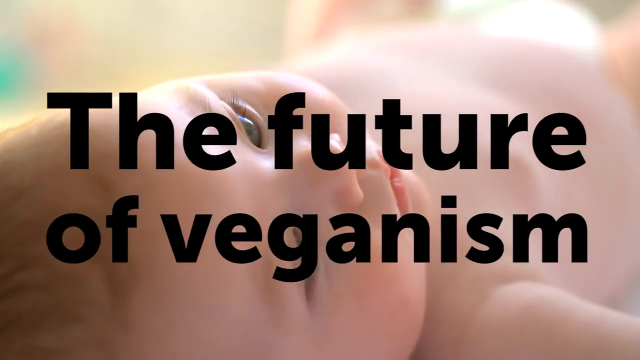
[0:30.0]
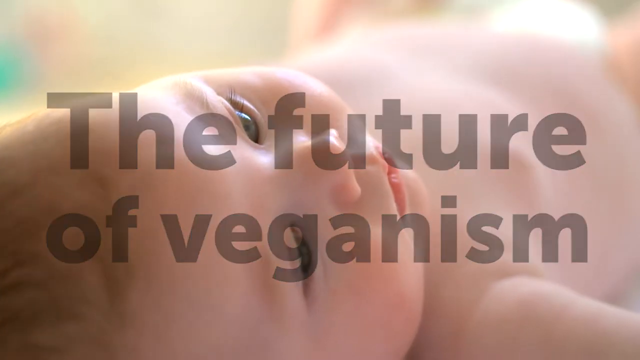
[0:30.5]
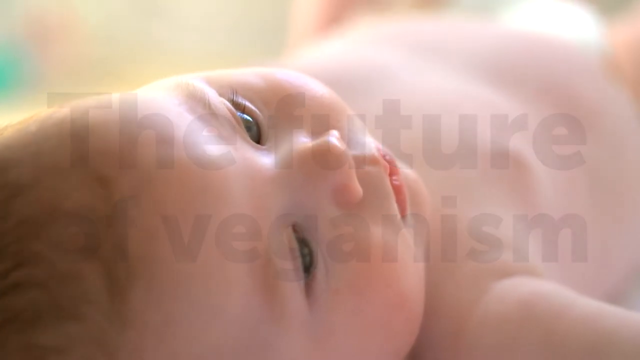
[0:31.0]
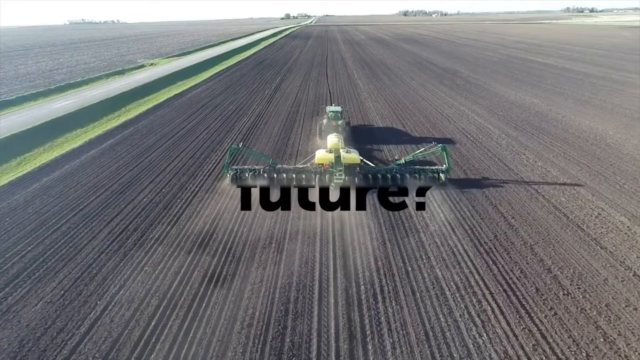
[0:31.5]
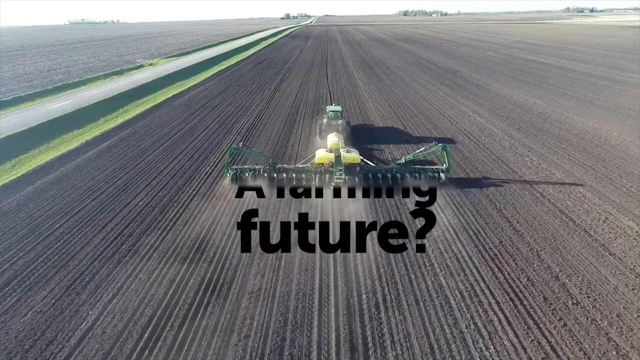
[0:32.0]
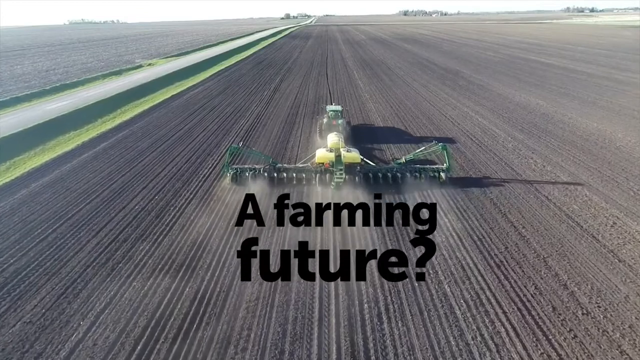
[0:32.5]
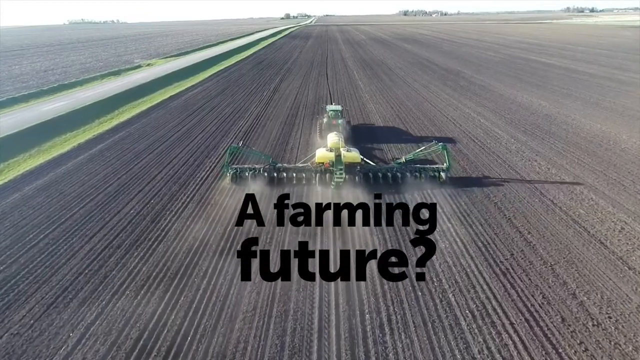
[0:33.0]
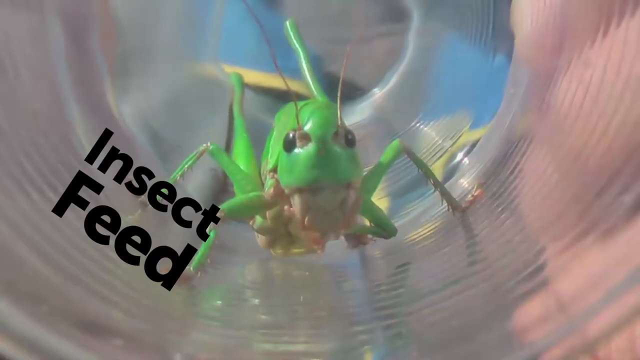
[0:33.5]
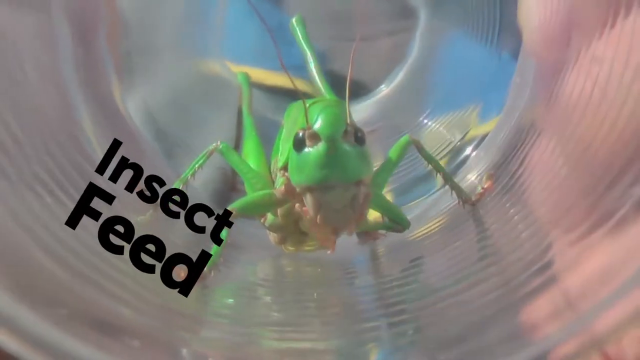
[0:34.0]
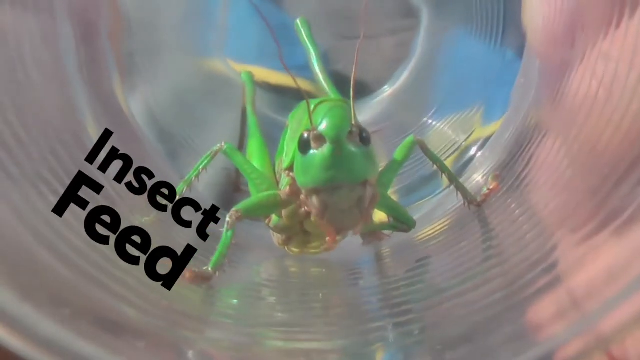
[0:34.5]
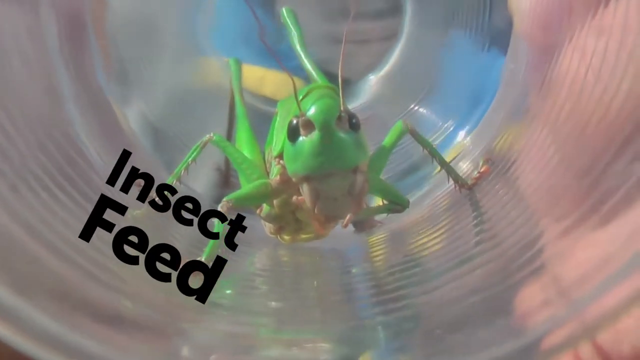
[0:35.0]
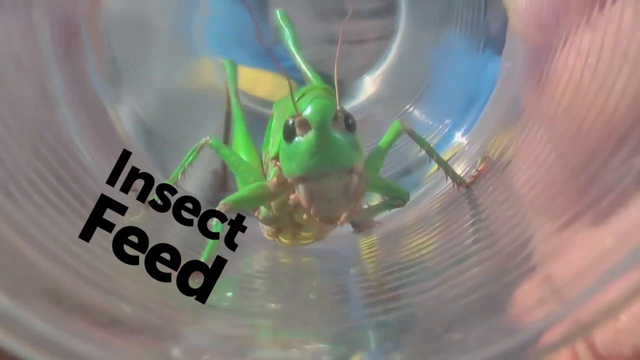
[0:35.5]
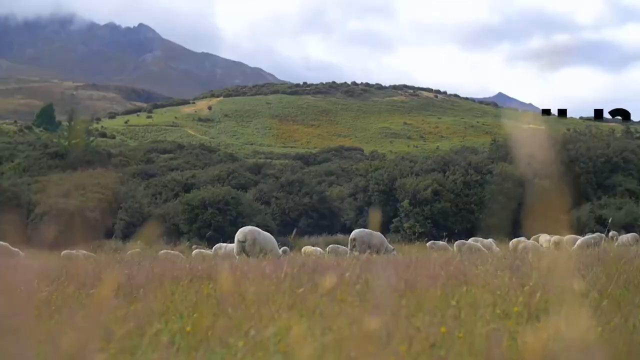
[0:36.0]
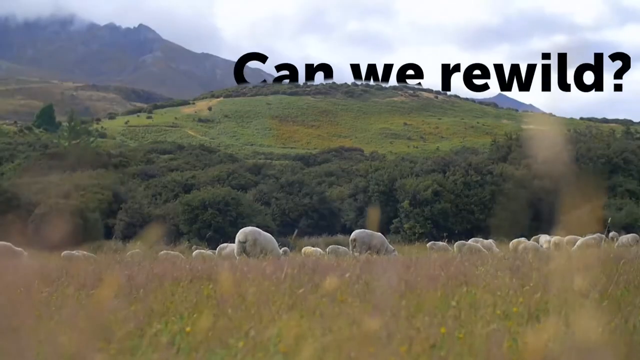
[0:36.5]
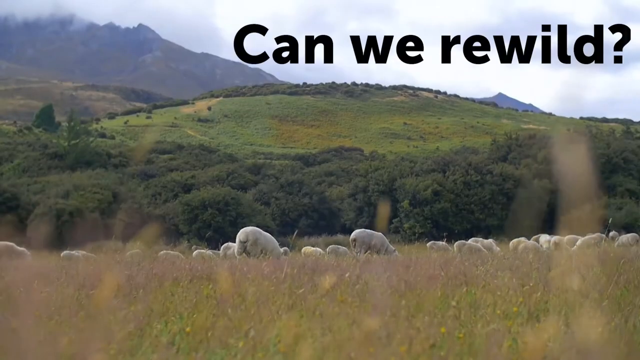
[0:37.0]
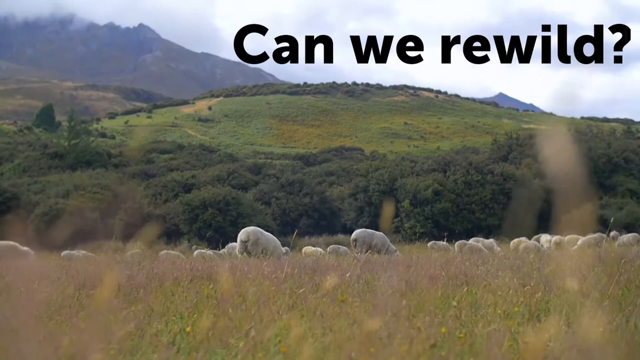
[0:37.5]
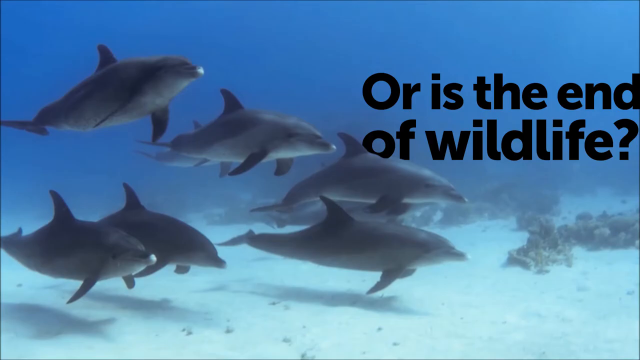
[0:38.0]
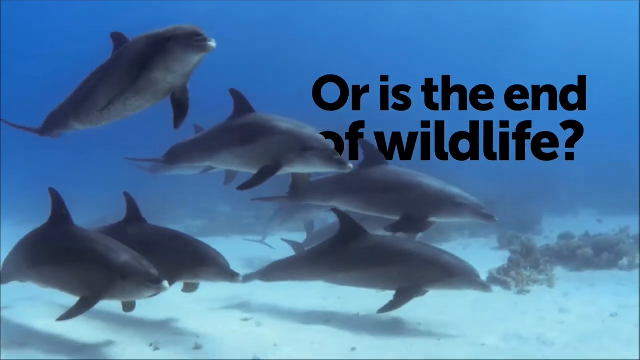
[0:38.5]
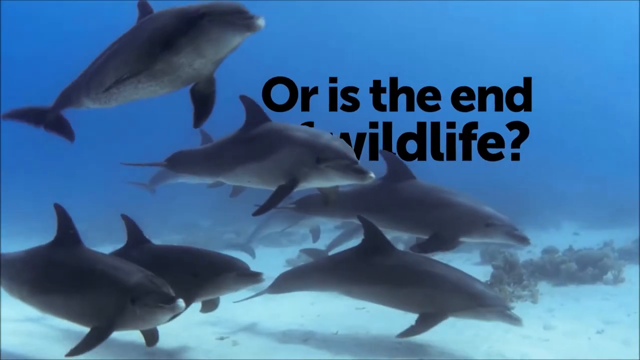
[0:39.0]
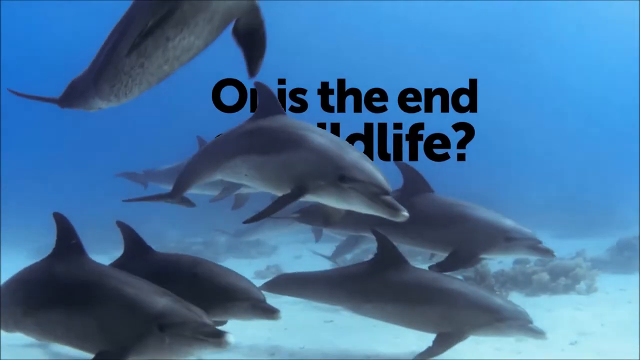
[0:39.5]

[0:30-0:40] The words "the future of veganism" appear in black with the little baby in the background. Farming equipment and a big field are shown, with the text "how does this have a future for farming?" A large expanse of land follows, then insect feeds and what looks to be some type of grasshopper. Black text reads "can we rebuild?" as sheep pasture over the land. Then the text "or is it the end of wildlife?" appears over an underwater shot of six to 12 dolphins swimming through the water.